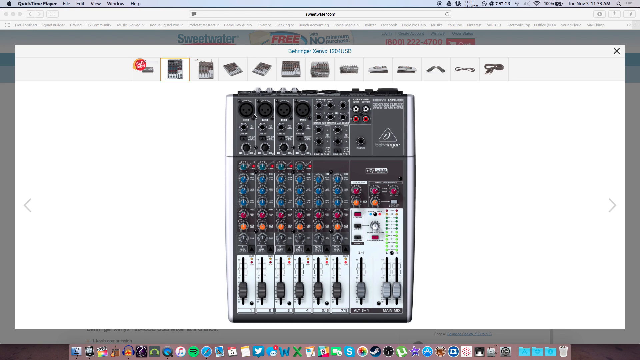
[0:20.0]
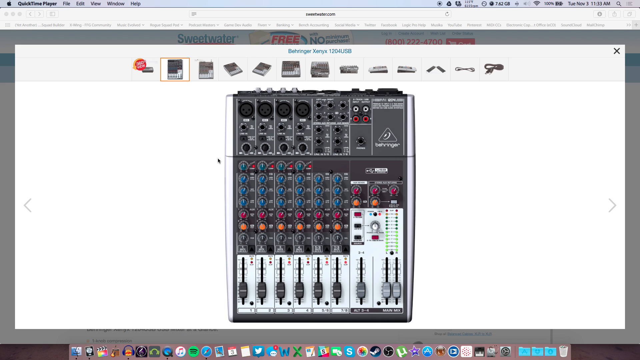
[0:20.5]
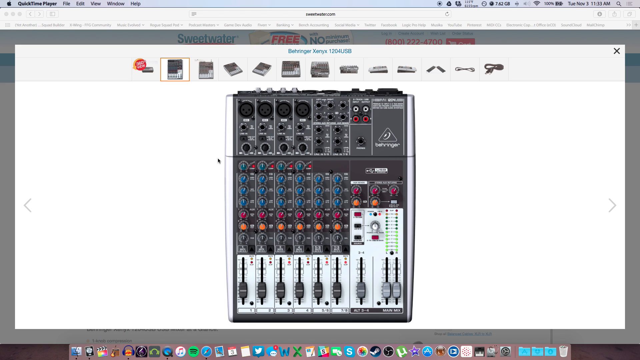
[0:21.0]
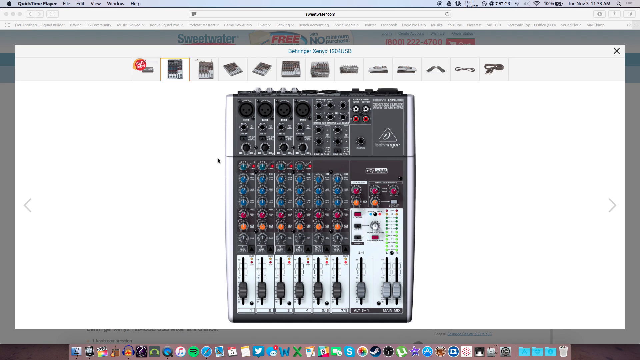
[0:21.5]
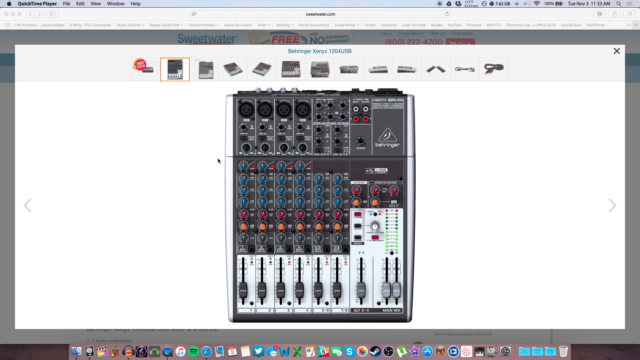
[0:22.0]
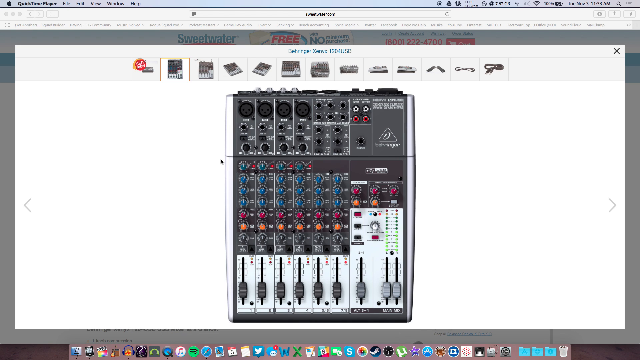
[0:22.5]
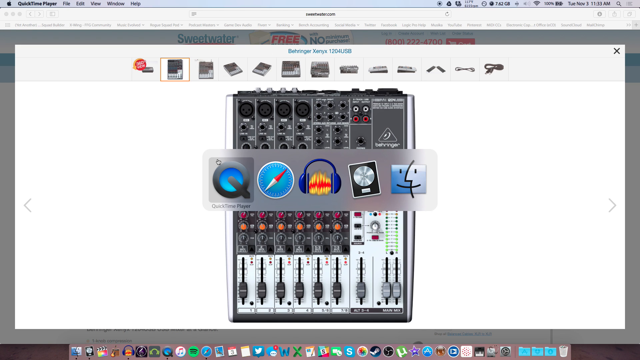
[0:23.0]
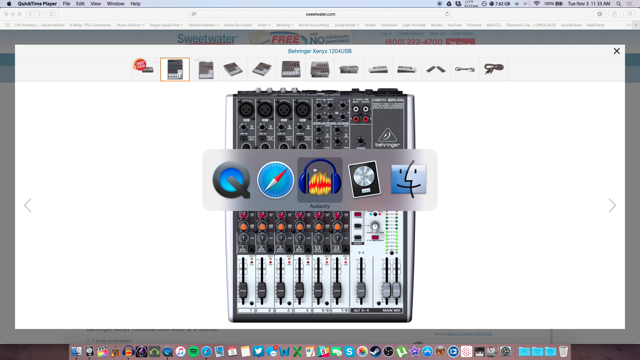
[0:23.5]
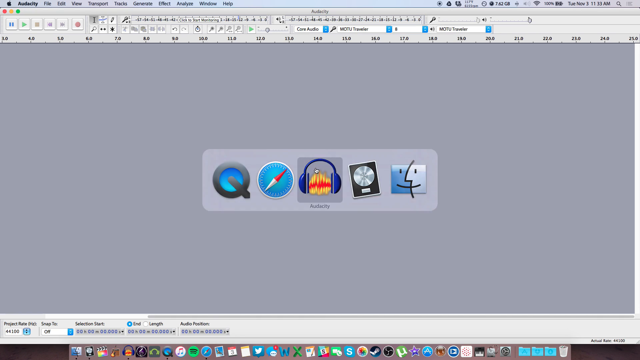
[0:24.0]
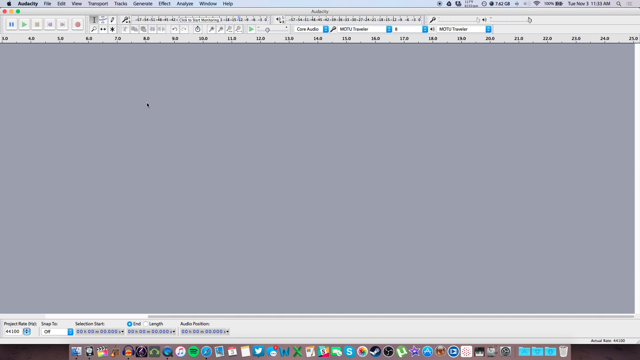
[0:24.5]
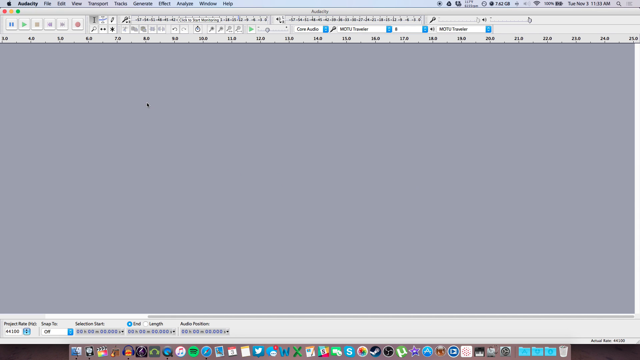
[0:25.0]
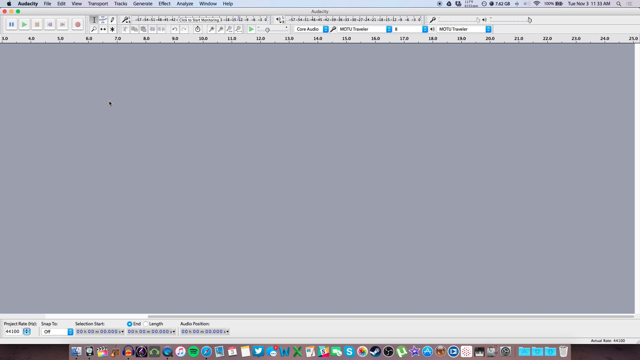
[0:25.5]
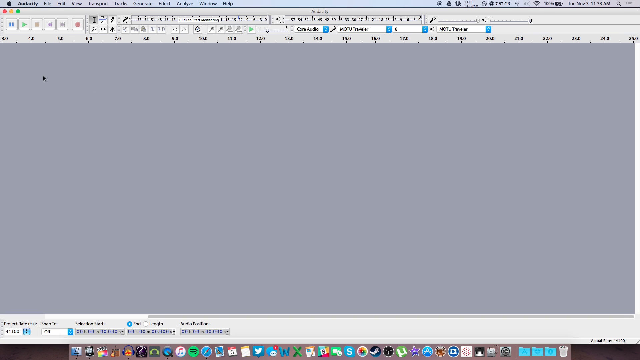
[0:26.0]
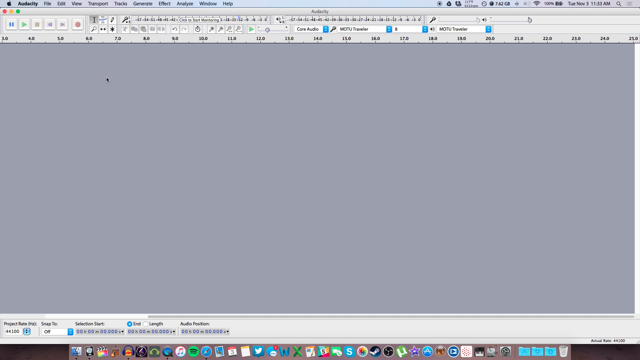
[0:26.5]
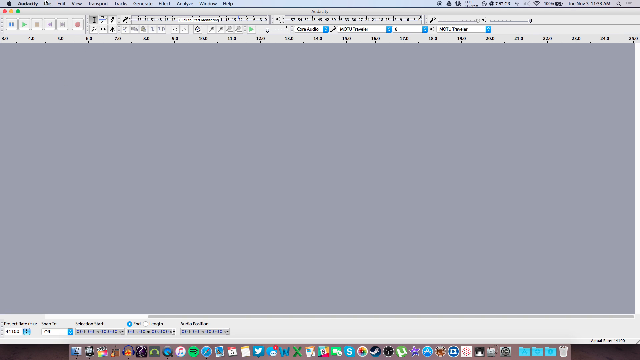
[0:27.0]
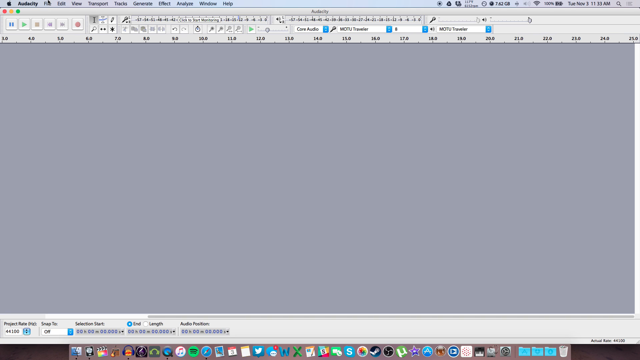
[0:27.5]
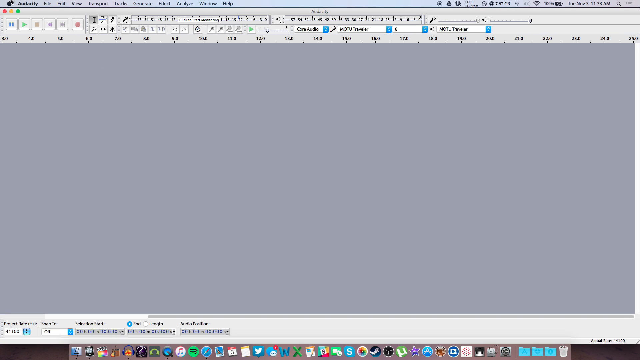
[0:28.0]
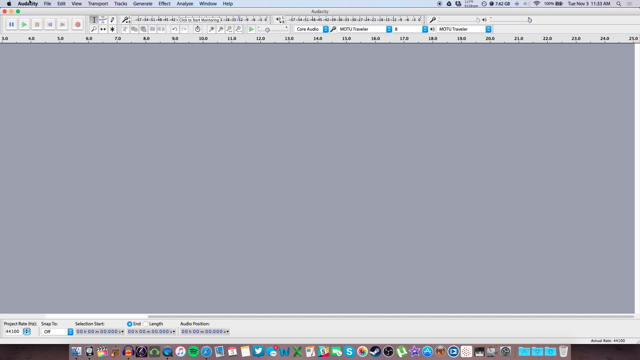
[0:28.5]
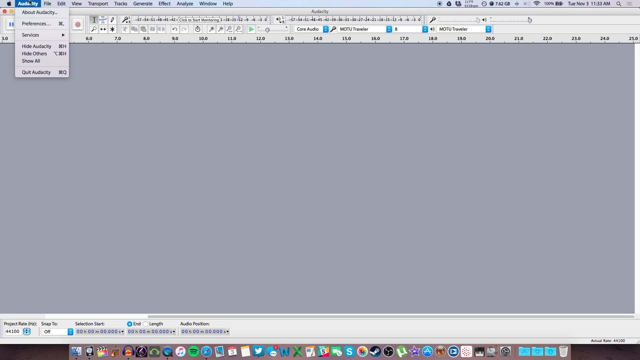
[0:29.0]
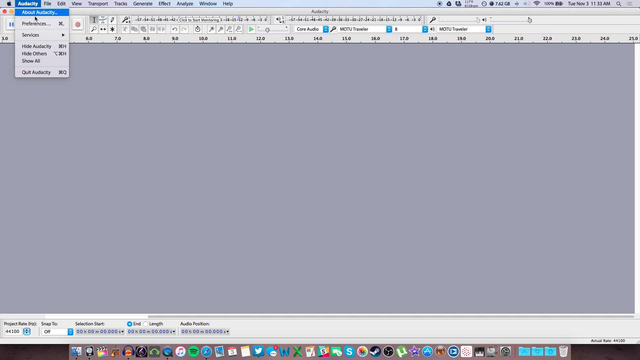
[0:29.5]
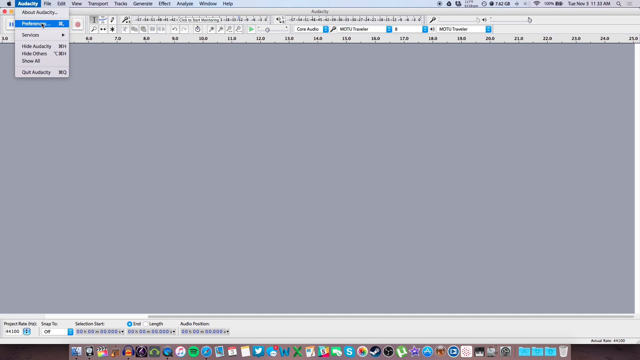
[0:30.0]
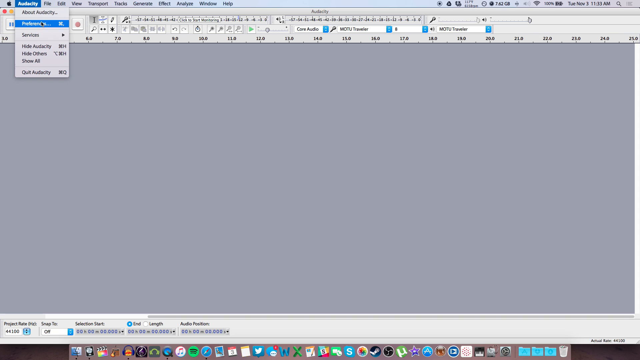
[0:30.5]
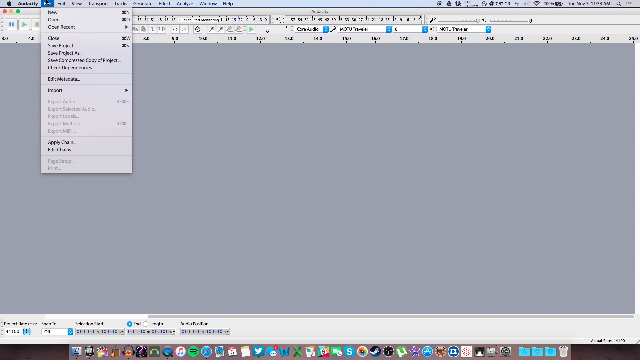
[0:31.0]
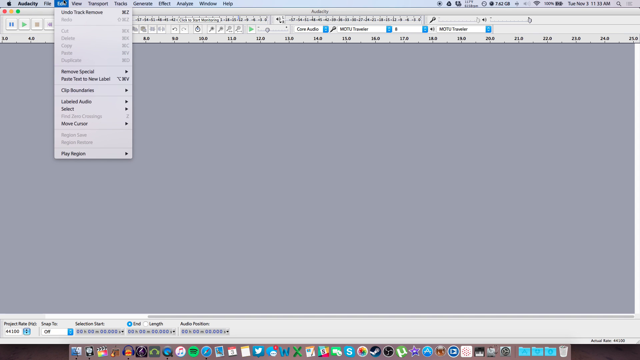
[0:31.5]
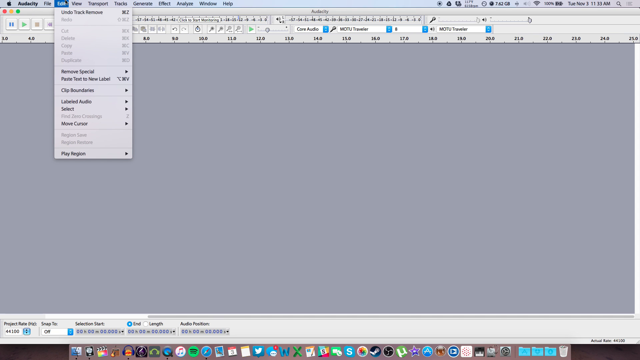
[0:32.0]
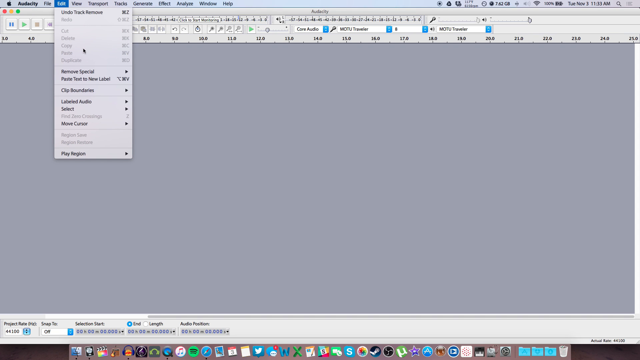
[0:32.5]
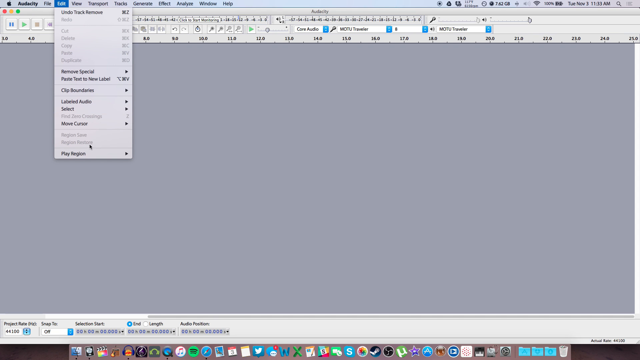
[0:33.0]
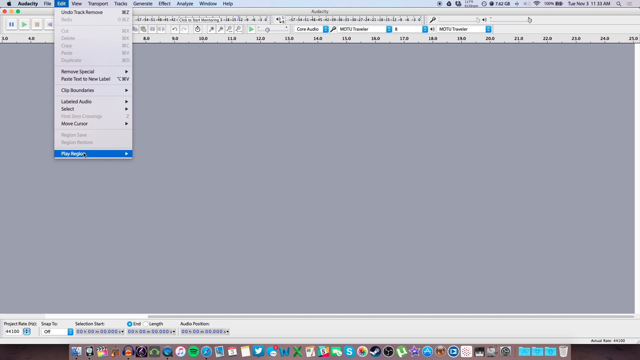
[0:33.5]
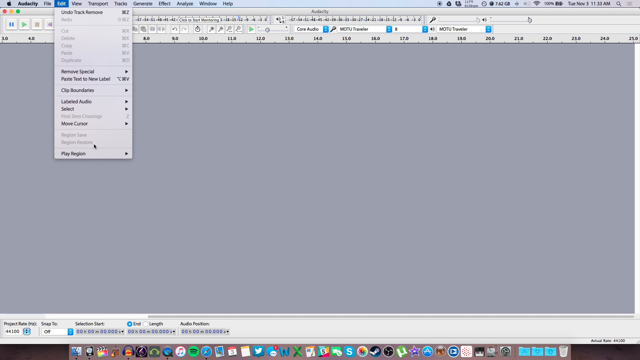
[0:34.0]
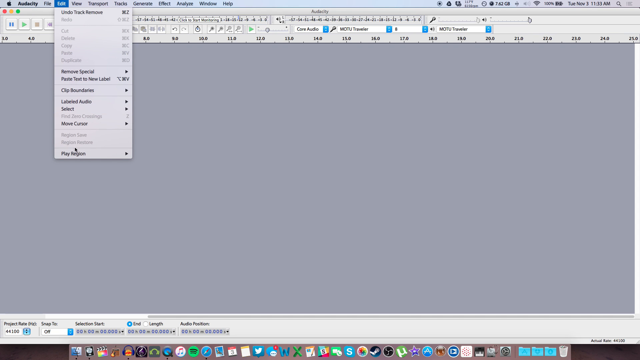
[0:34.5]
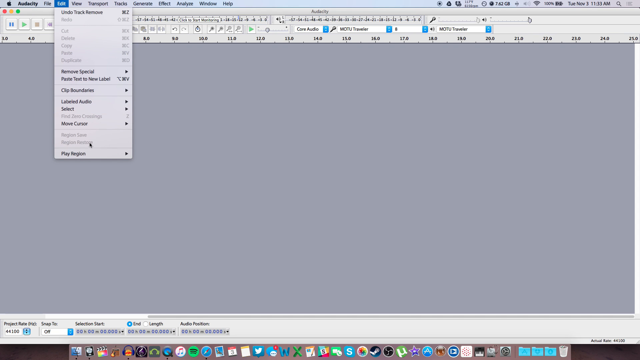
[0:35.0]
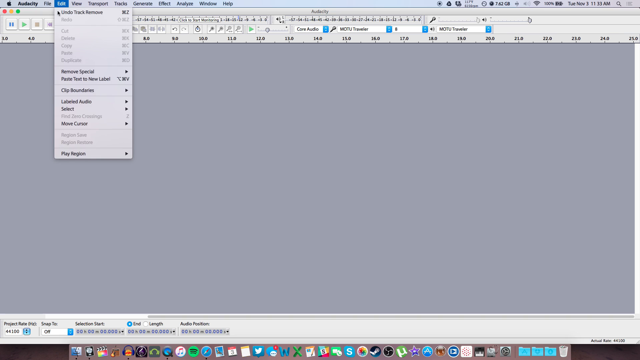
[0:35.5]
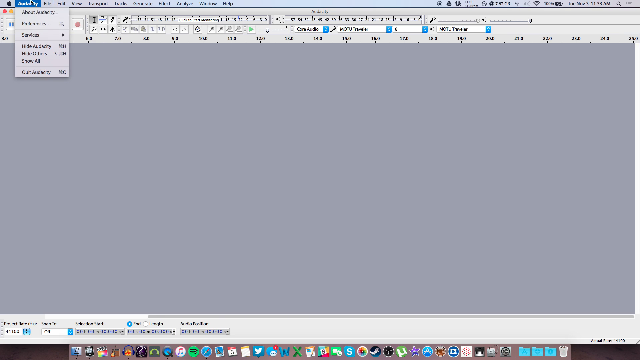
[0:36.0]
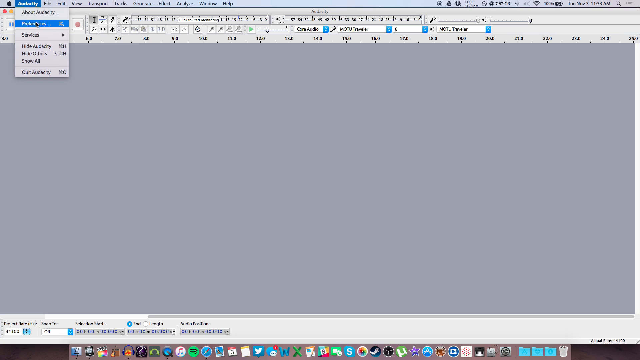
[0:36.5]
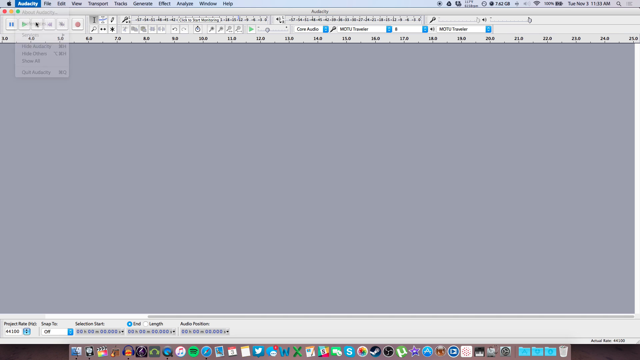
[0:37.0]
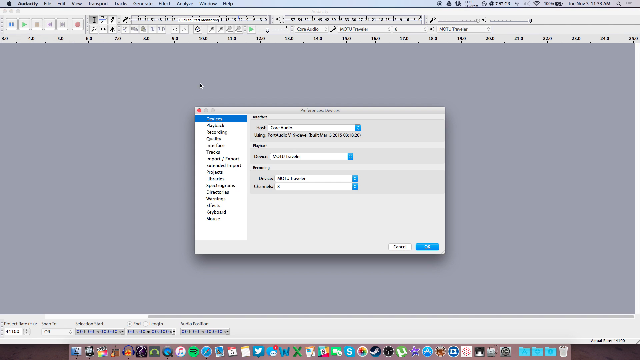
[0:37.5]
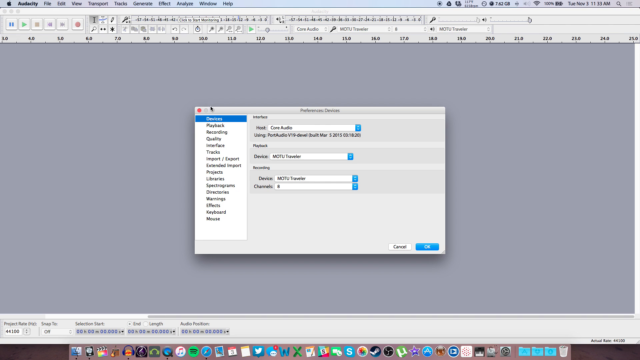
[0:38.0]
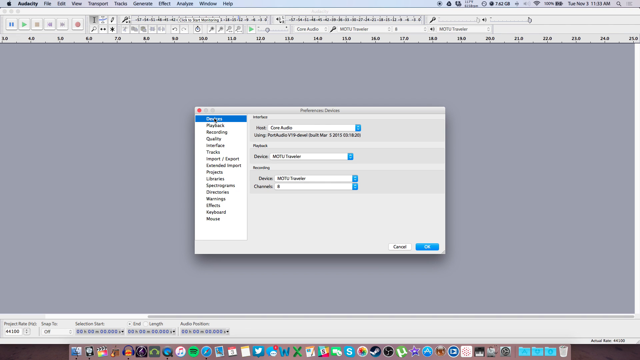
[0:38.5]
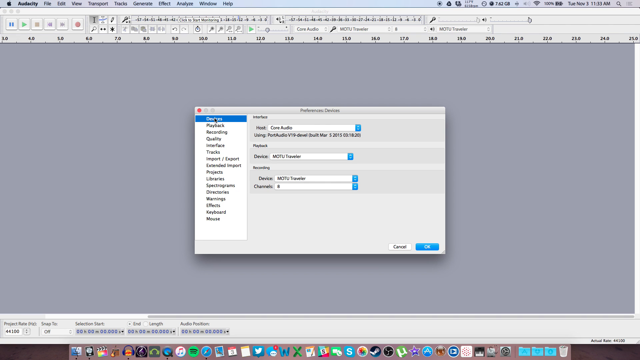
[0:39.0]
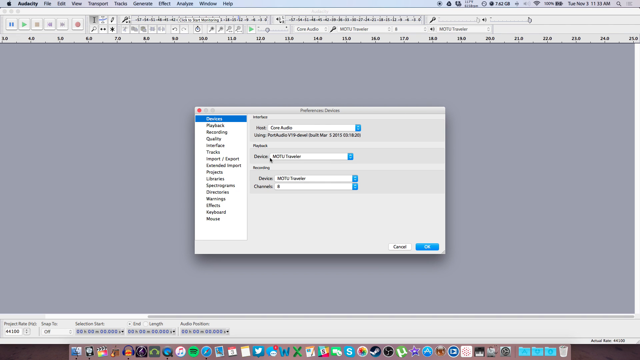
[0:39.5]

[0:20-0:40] The second image is still up for a moment, then goes away after a pop-up appears. The pop-up has five functions, all shown as pictures: a letter Q, what looks like maybe the Safari one, a pair of headphones with a yellow face in the middle, a record player, and a happy face that looks like it faces both forward and to the side. The pop-up goes away and the screen is completely blank, apparently inside some type of program. The person picks the first button, which apparently says "autoplay", and a drop-down menu with five options appears. They then go through the menus at the top, File and then Edit, and each one they click opens a drop-down menu.